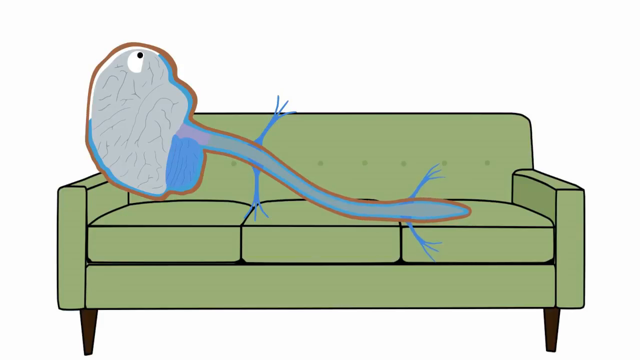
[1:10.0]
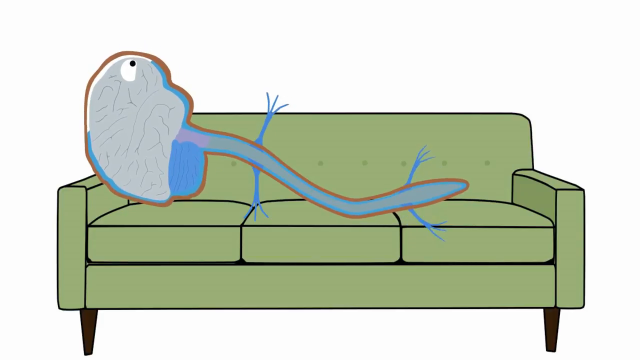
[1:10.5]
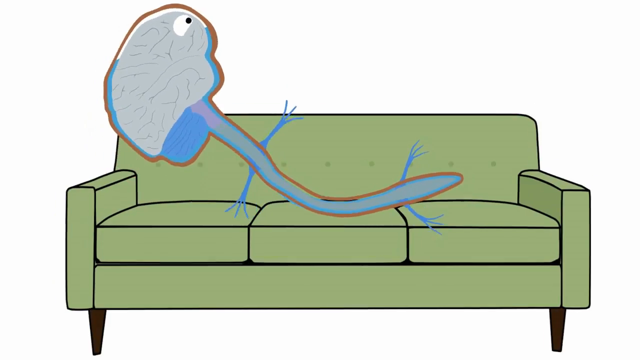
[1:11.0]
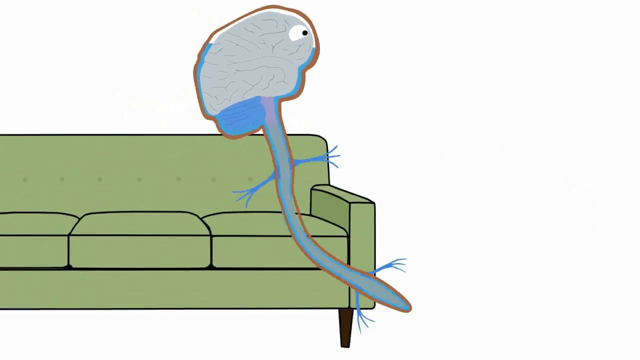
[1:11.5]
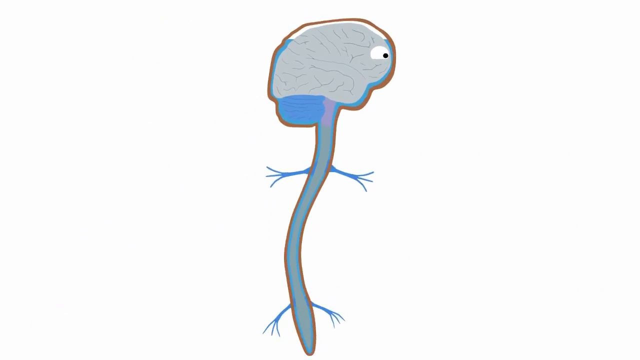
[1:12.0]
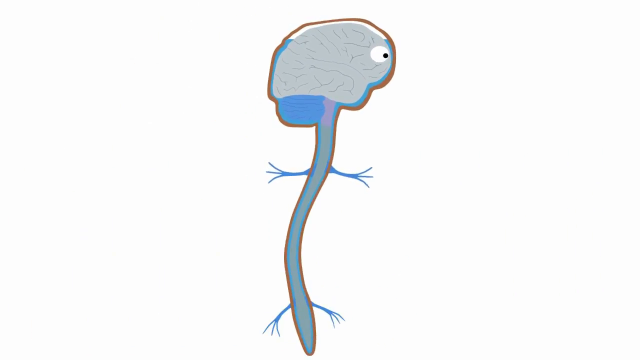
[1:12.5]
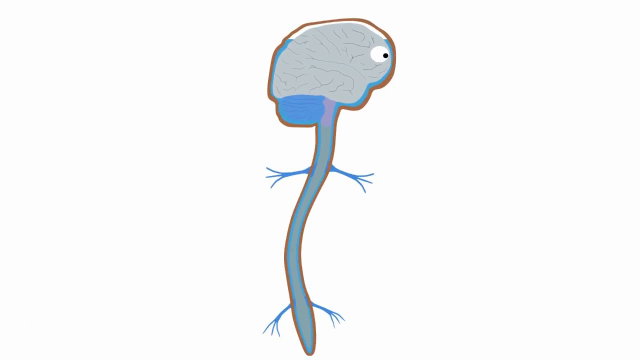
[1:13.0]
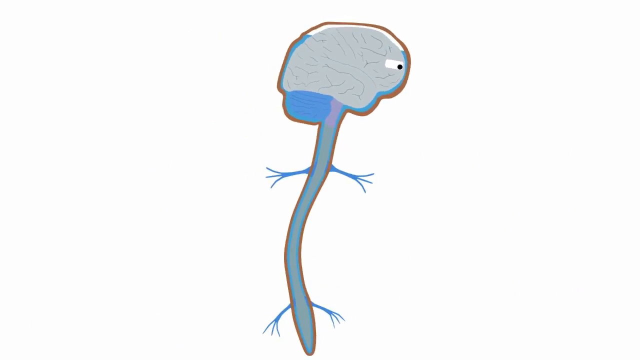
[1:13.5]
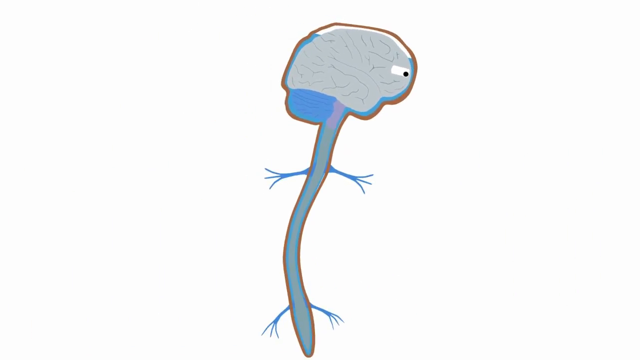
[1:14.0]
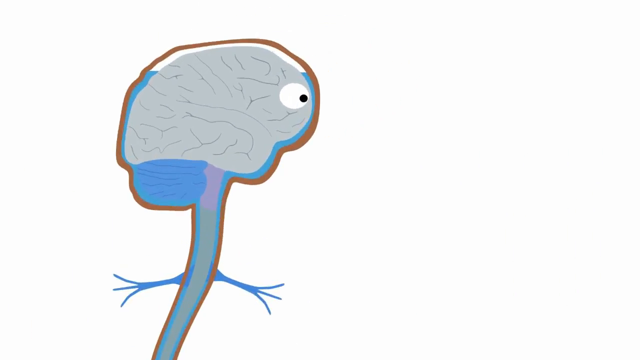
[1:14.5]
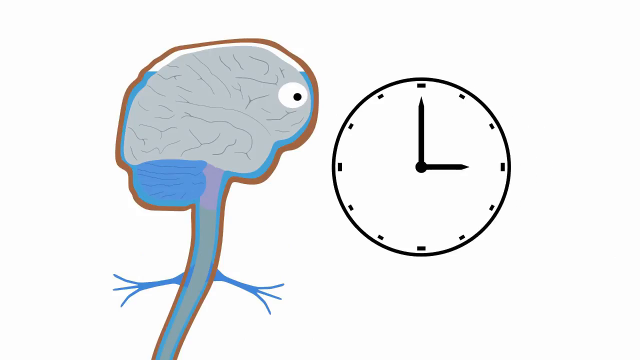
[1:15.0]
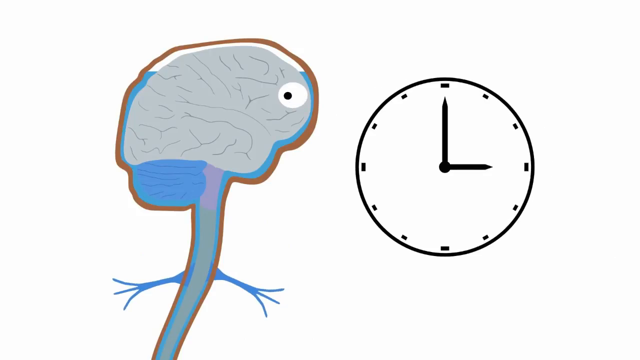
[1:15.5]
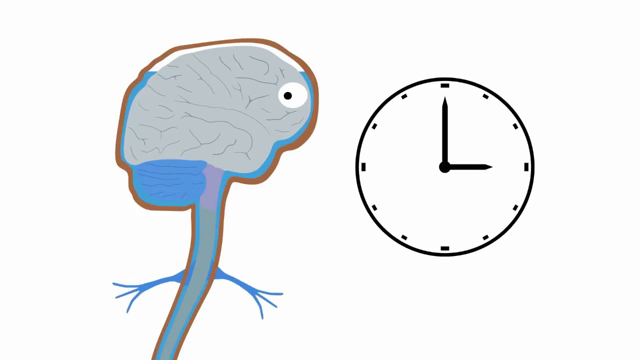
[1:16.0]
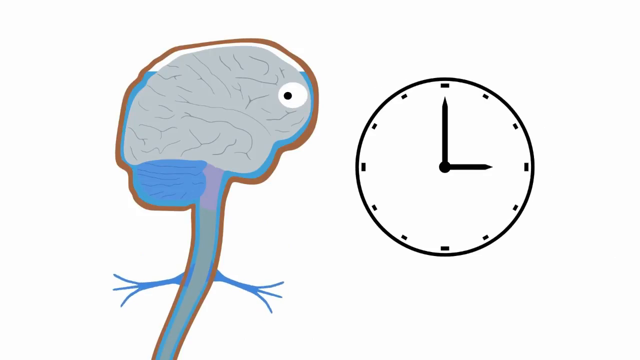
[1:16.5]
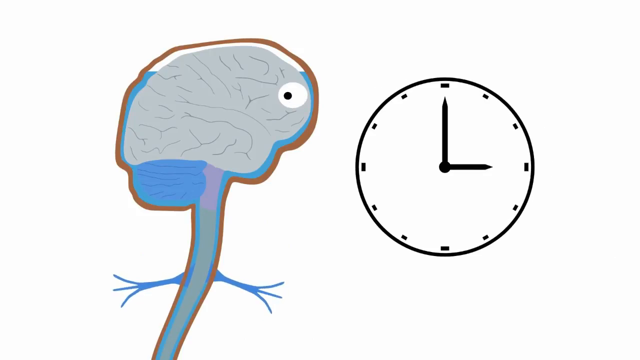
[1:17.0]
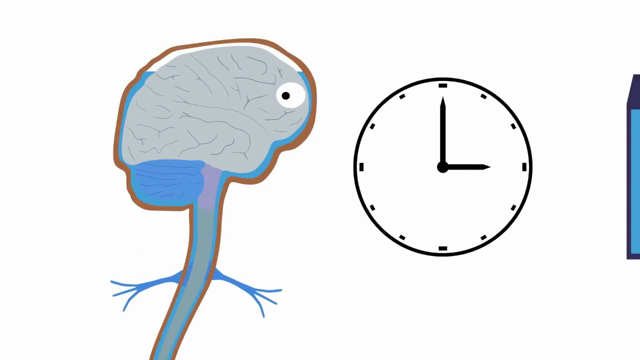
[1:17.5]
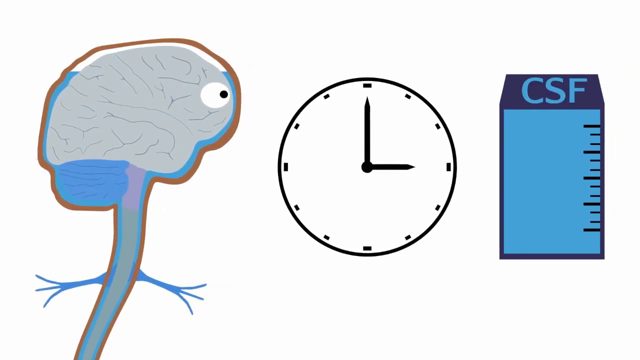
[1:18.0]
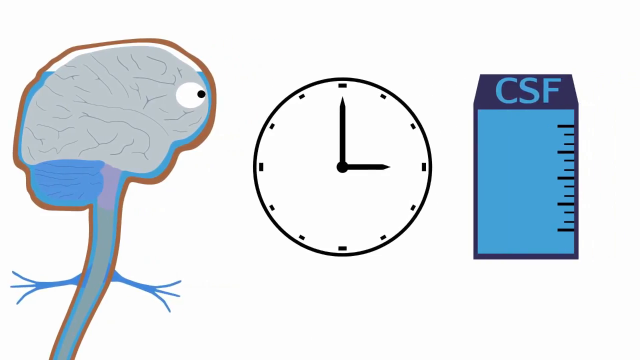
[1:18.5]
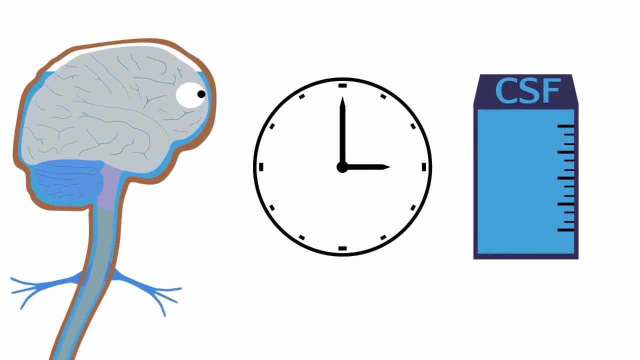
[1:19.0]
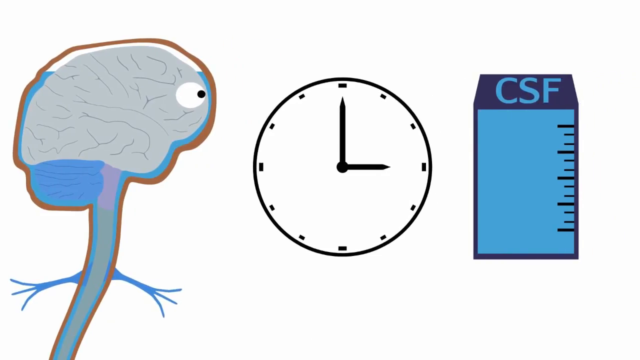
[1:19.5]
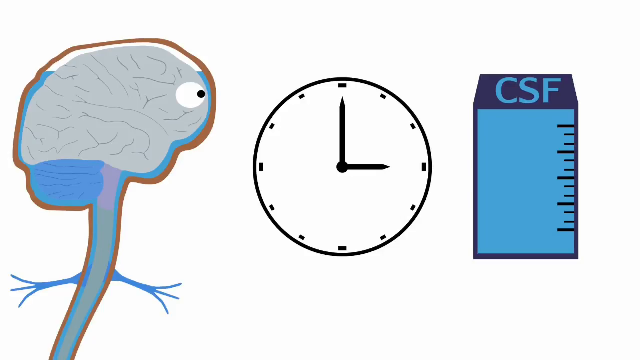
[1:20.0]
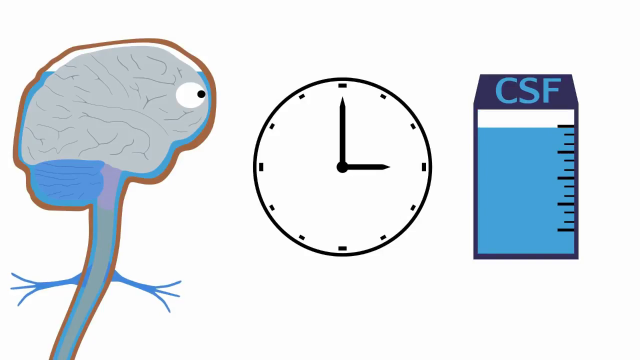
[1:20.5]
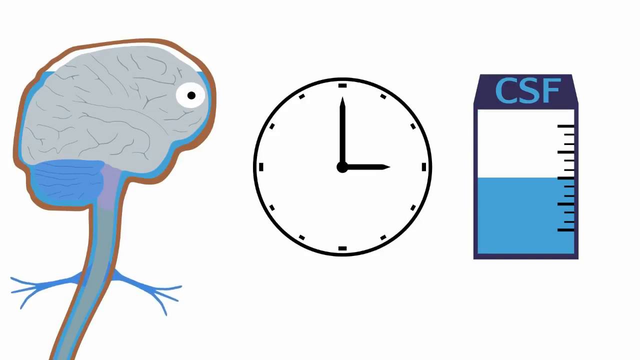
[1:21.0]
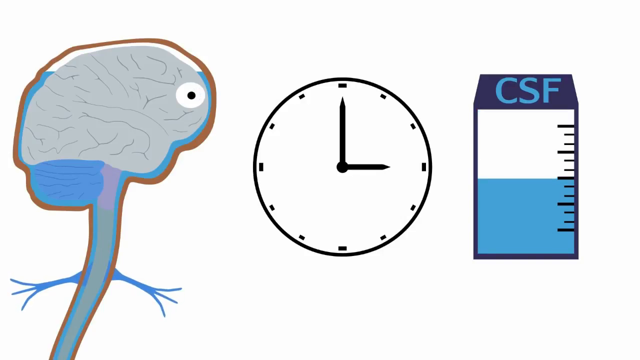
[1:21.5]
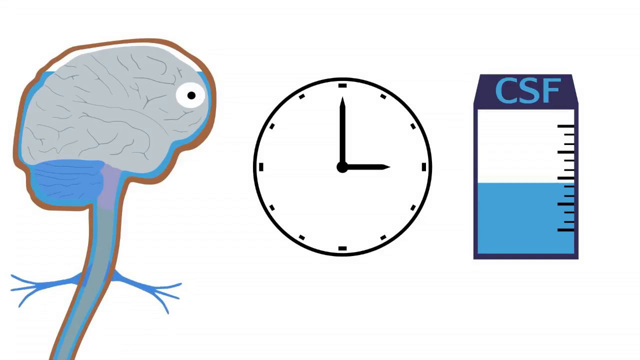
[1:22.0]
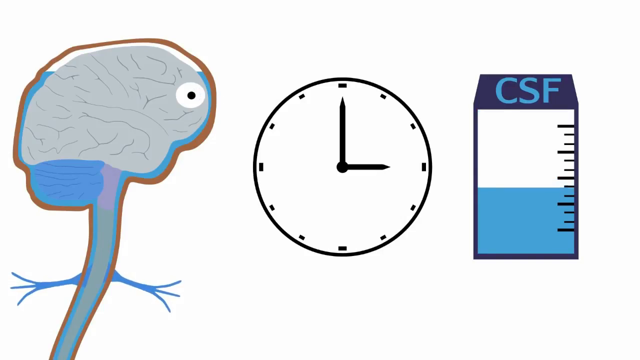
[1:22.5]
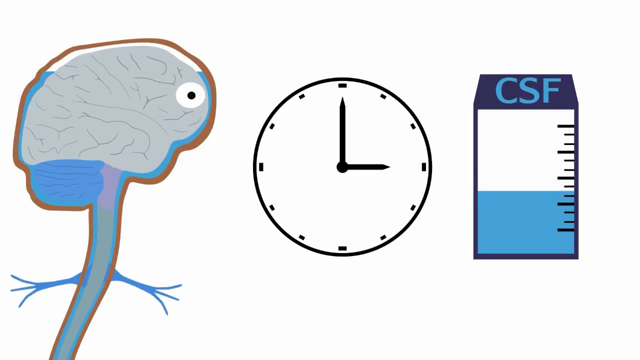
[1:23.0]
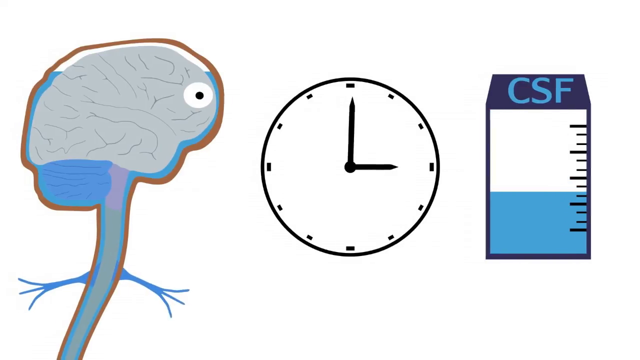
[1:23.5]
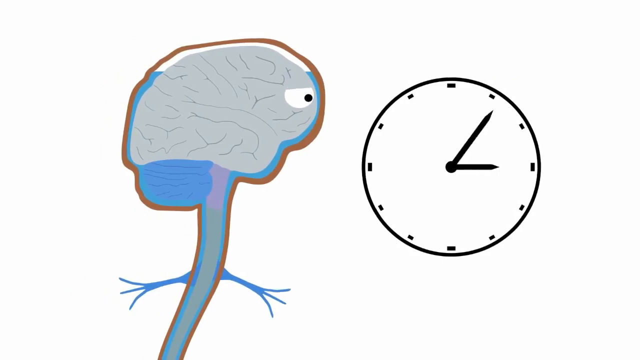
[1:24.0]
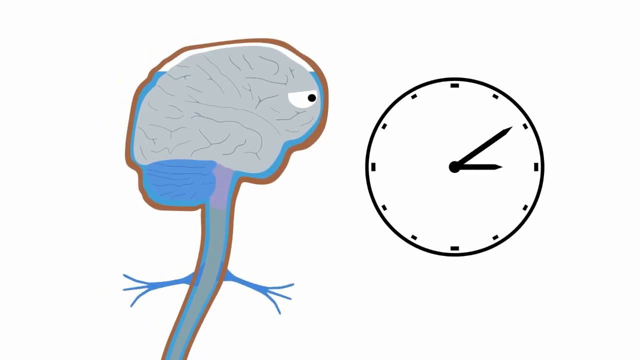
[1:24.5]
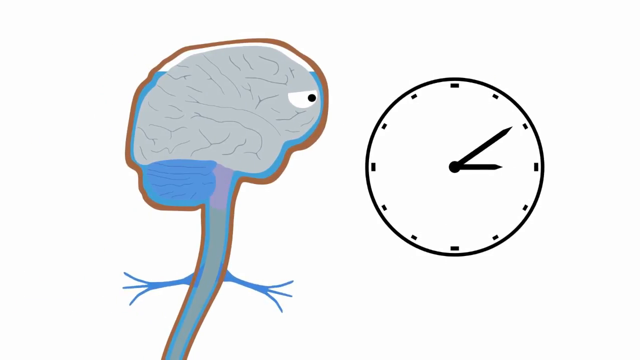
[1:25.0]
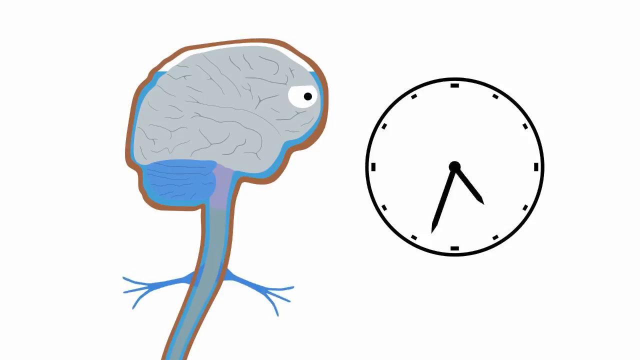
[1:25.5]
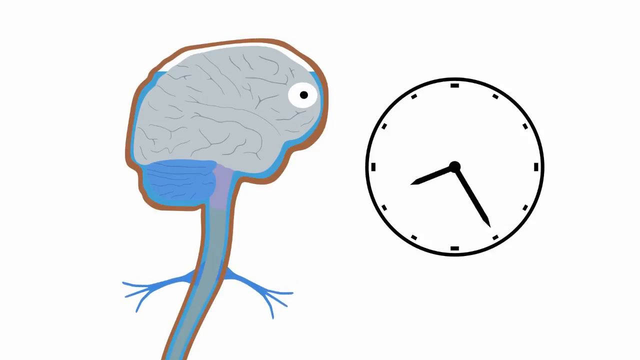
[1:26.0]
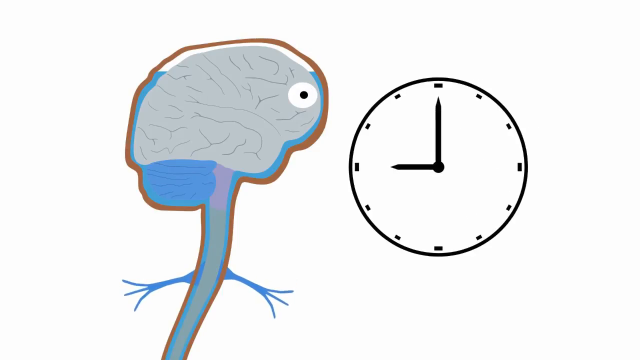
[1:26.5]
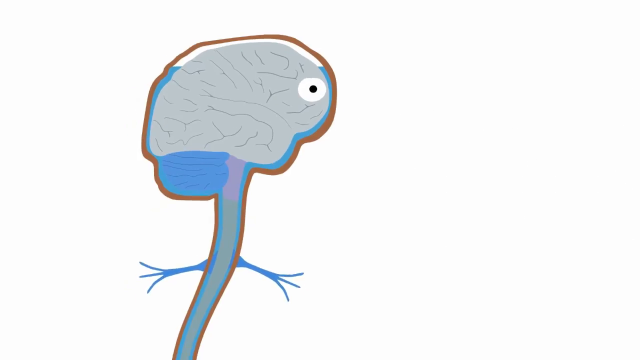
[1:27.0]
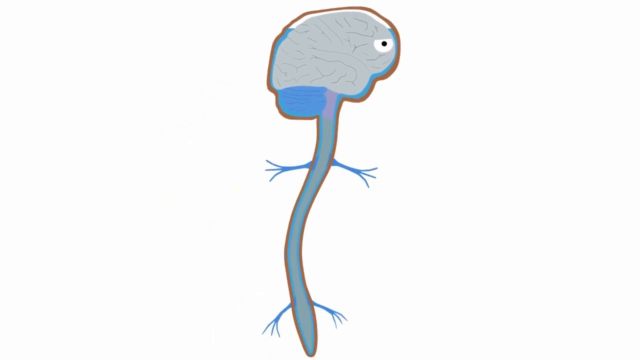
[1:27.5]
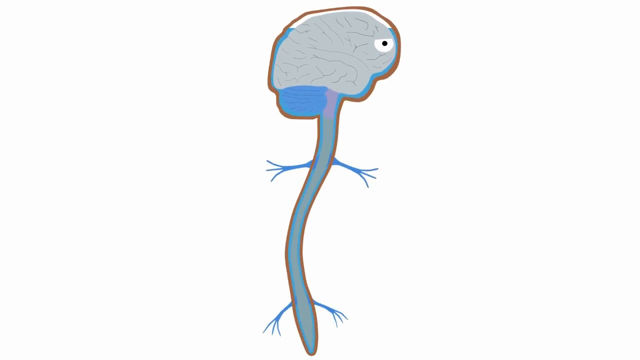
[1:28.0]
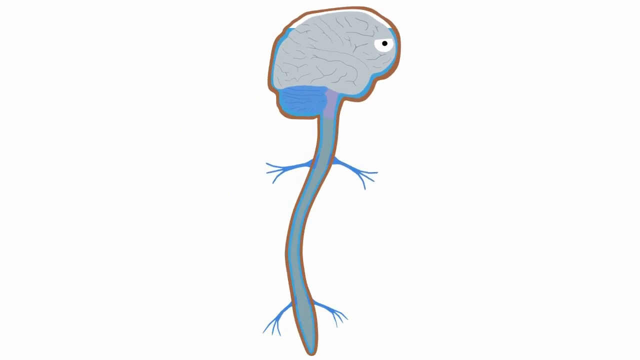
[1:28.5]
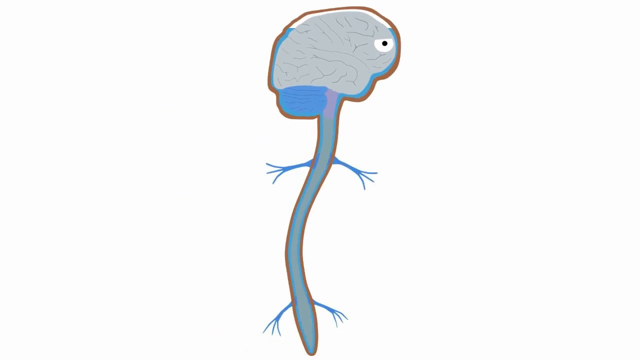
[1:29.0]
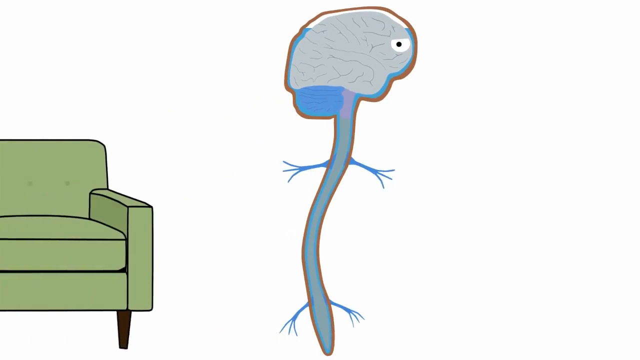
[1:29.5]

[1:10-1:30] The spinal cord/brain figure on the couch continues to move a little, then gets up off the couch and is shown upright against a white background with a clock next to it. The clock's little hand is at 3 and the big hand at 12, and a CSF logo is next to it. Something kind of like a blue ruler appears, seemingly measuring the amount of CSF in the person, and its level goes down slowly while the clock moves. The clock then disappears from view, the camera zooms out a little on the brain/spinal cord graphic, and the figure lays back down onto the green couch, which has reappeared. The blue level in the figure's brain adjusts, apparently due to gravity, and there are some empty white spots at the top of the head.